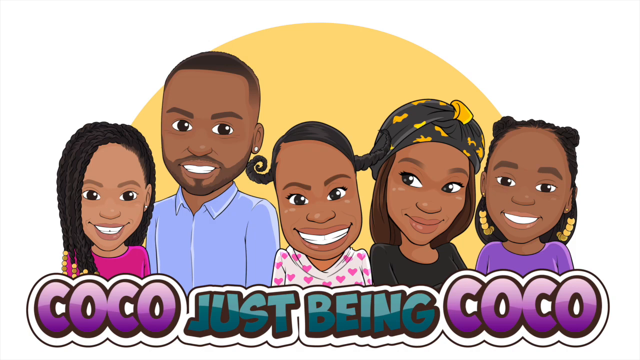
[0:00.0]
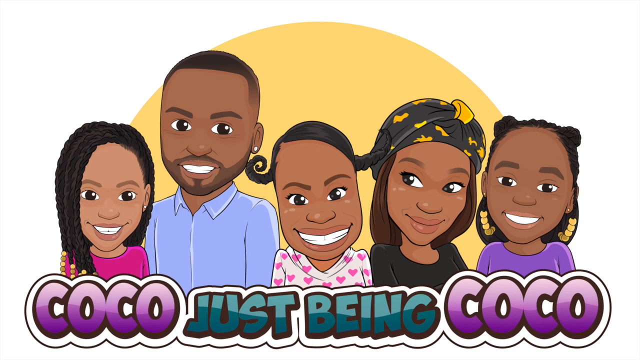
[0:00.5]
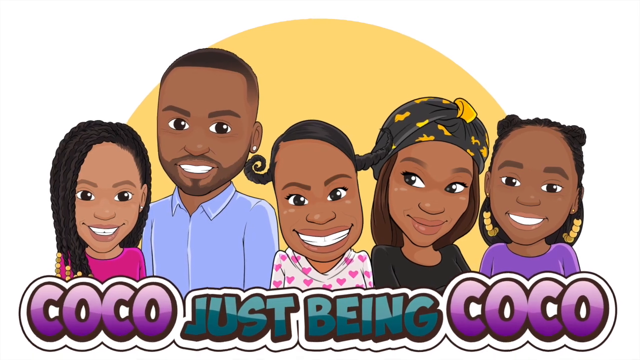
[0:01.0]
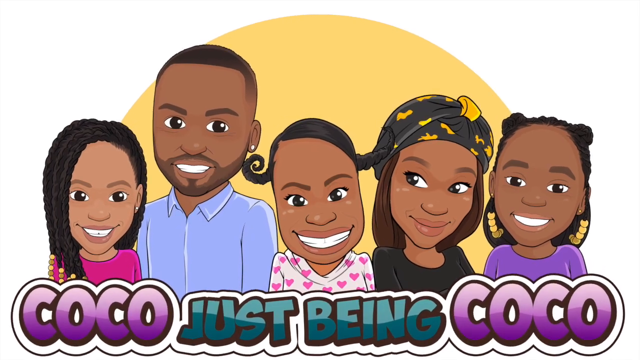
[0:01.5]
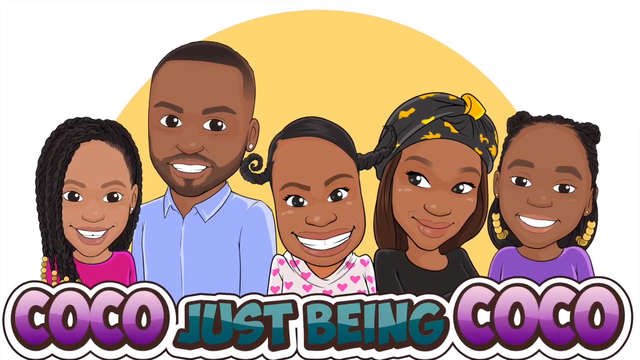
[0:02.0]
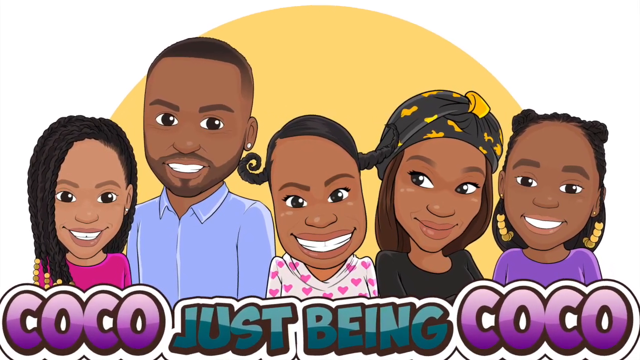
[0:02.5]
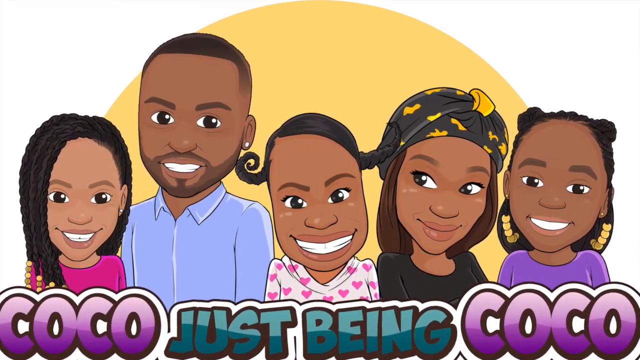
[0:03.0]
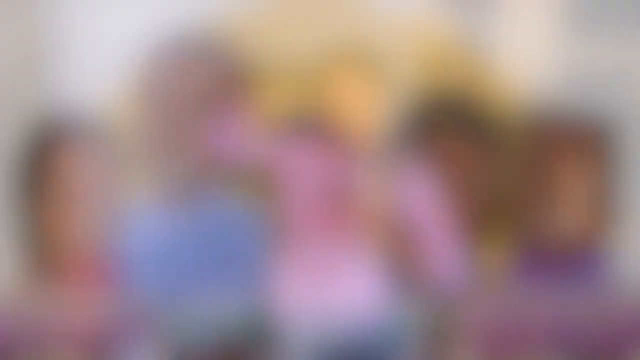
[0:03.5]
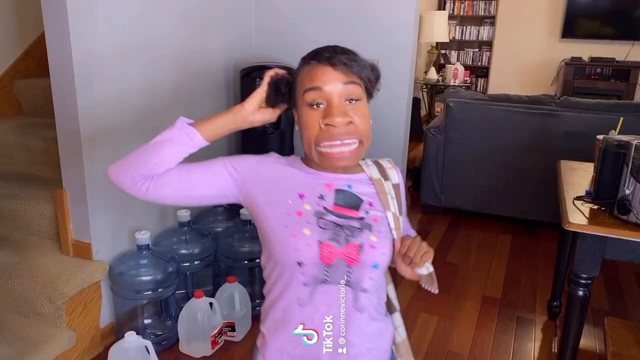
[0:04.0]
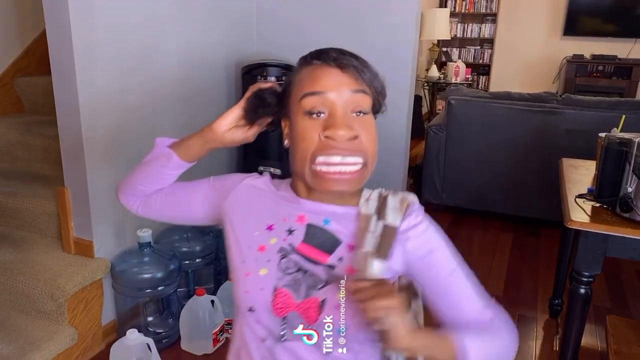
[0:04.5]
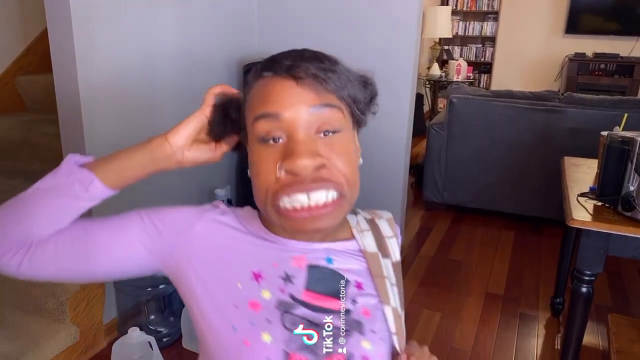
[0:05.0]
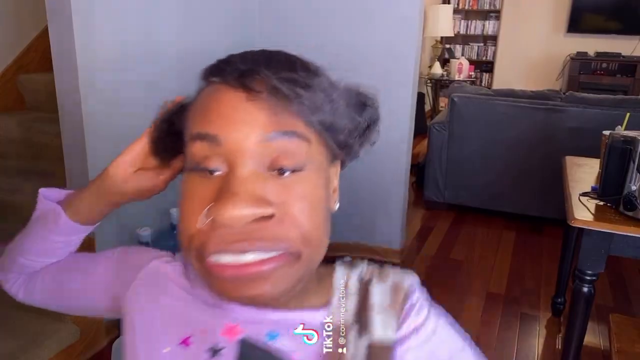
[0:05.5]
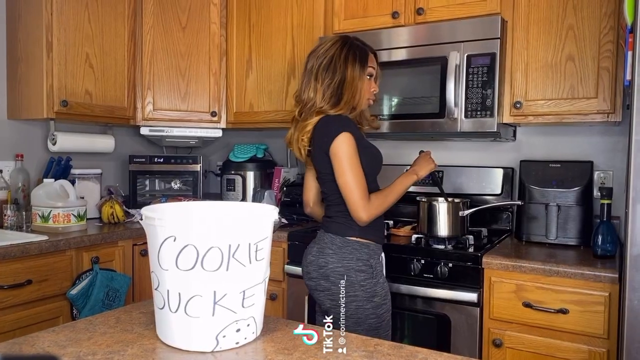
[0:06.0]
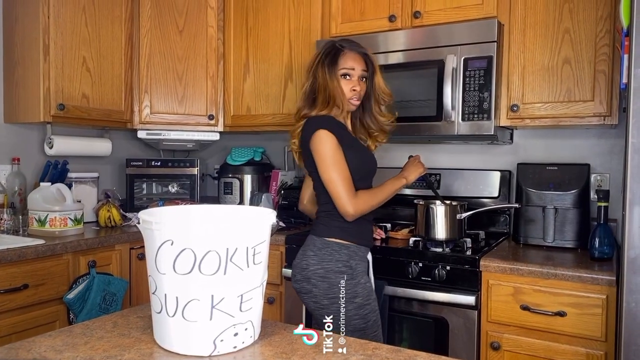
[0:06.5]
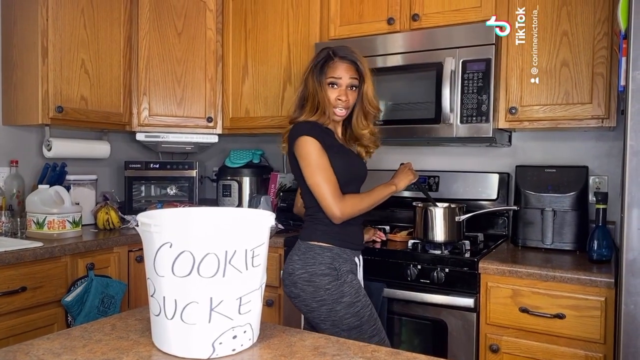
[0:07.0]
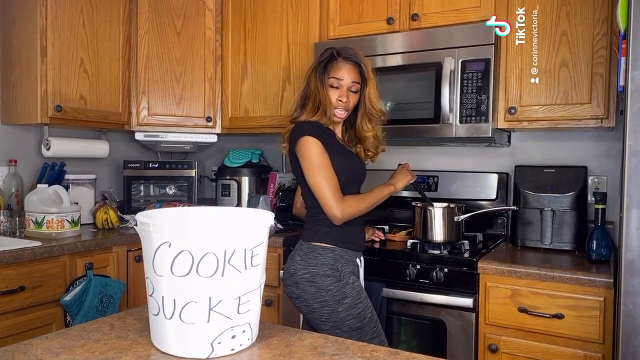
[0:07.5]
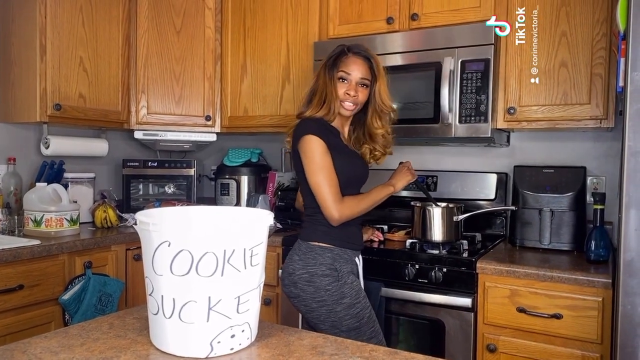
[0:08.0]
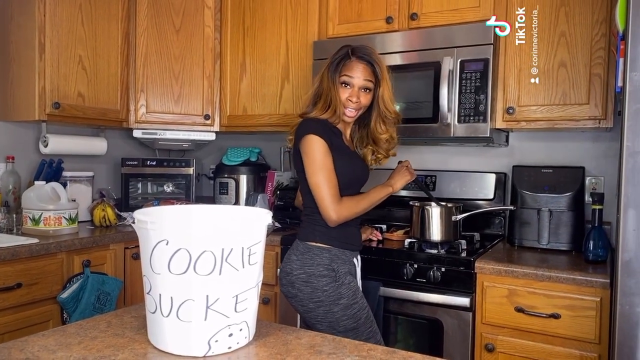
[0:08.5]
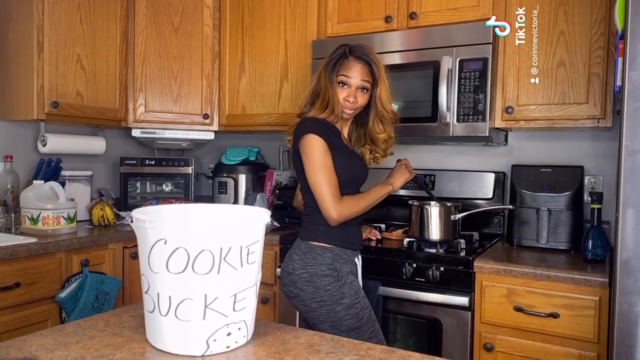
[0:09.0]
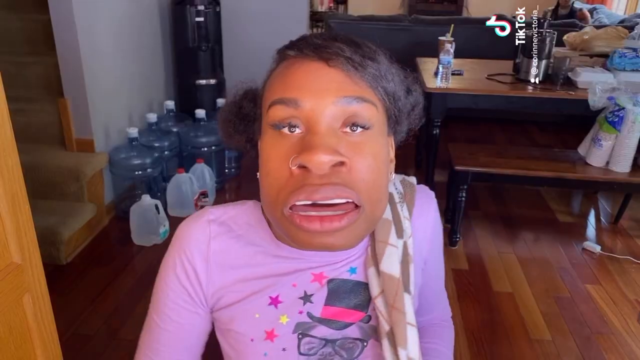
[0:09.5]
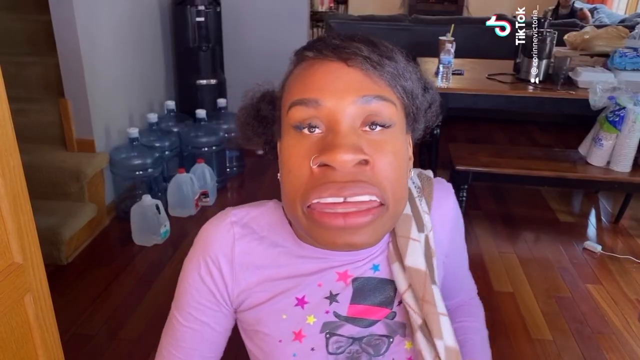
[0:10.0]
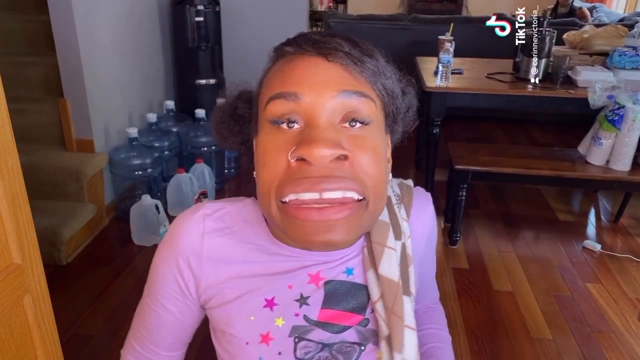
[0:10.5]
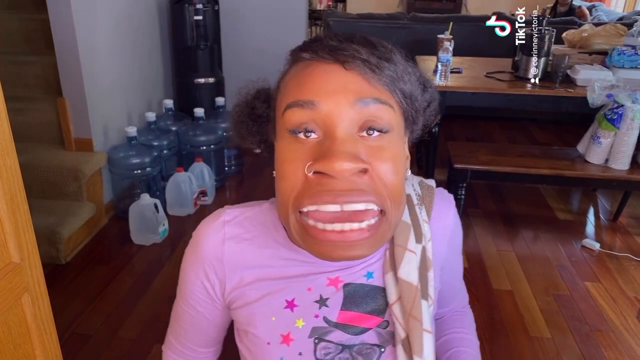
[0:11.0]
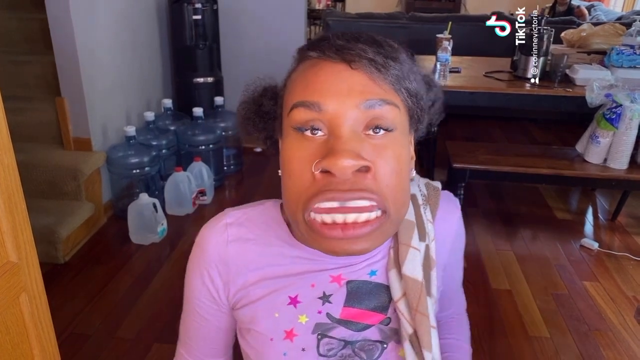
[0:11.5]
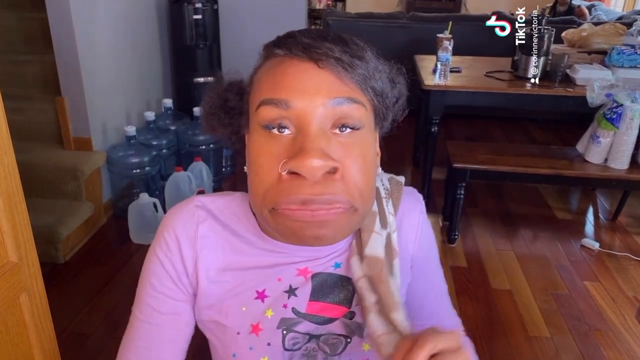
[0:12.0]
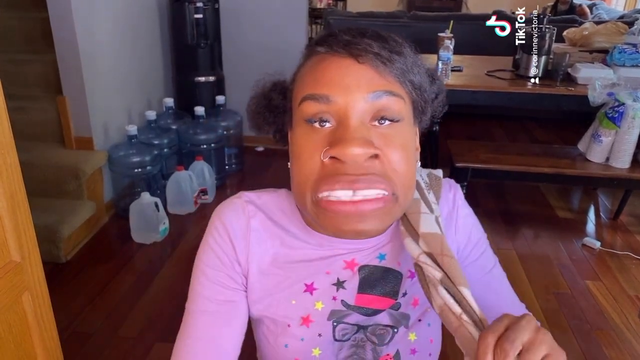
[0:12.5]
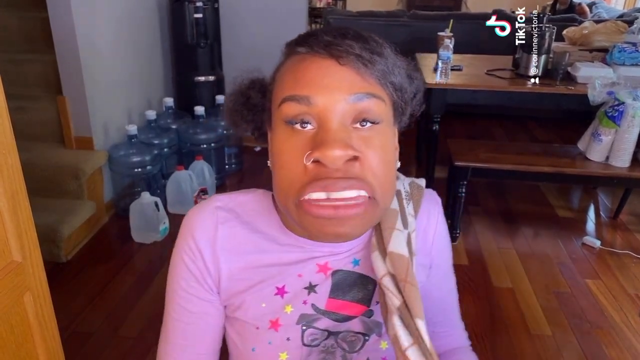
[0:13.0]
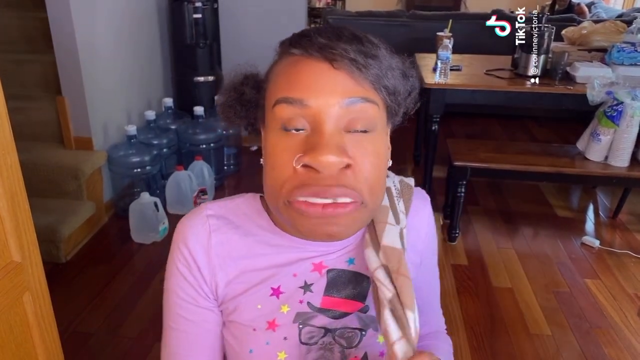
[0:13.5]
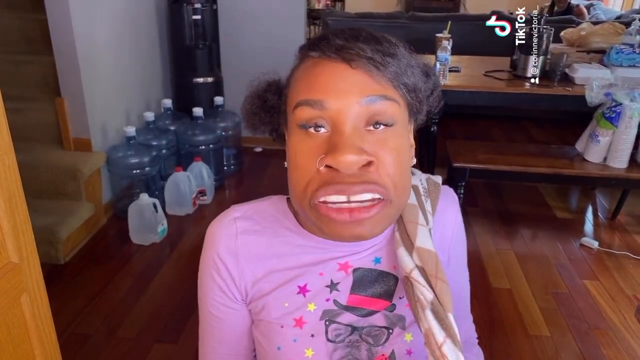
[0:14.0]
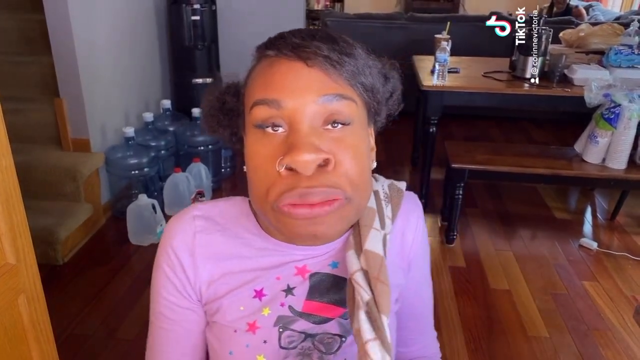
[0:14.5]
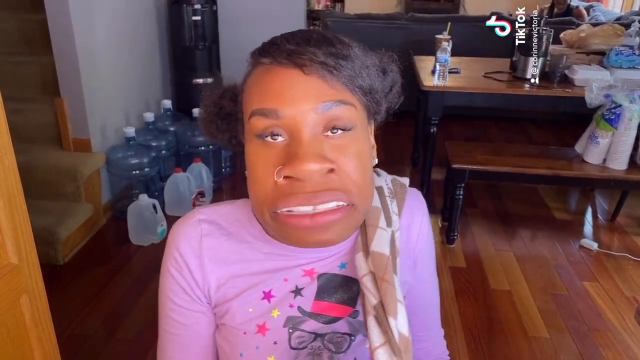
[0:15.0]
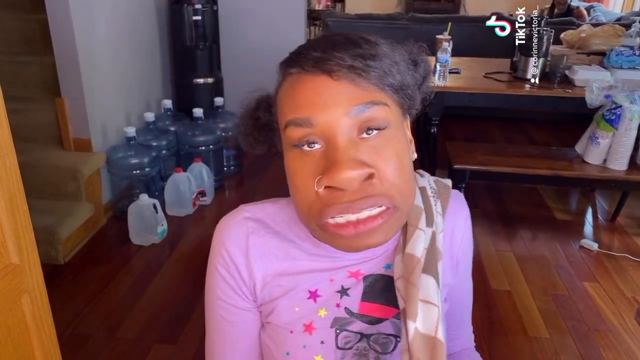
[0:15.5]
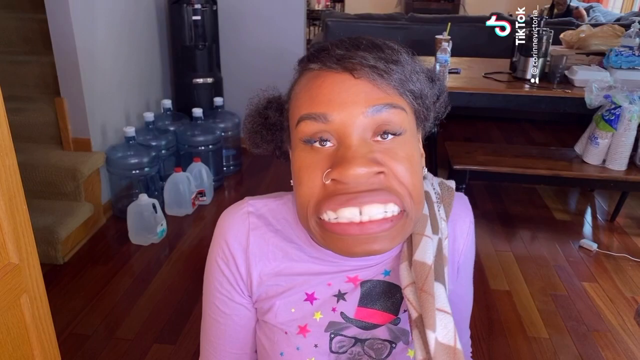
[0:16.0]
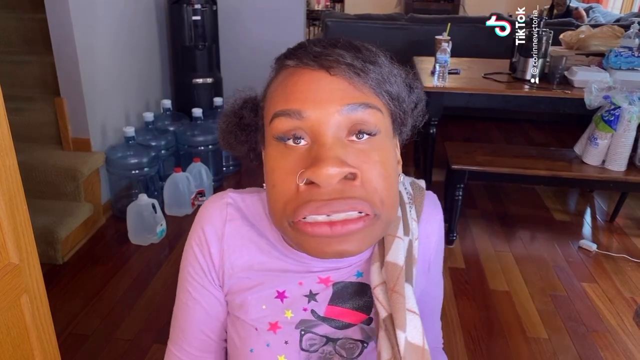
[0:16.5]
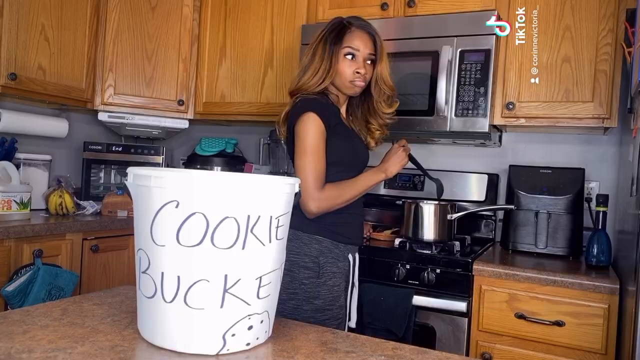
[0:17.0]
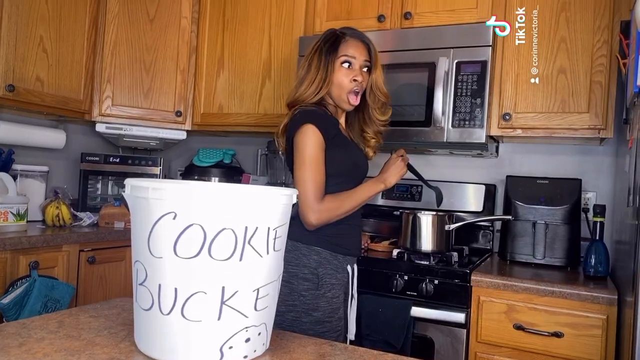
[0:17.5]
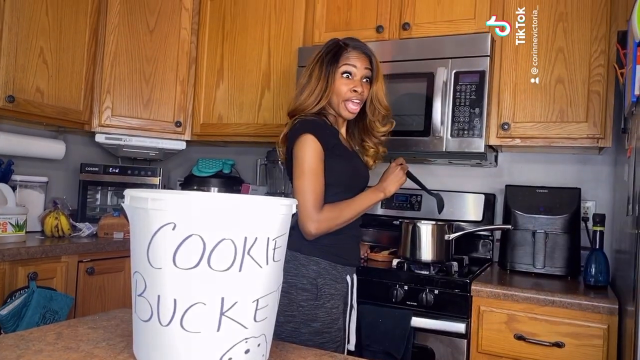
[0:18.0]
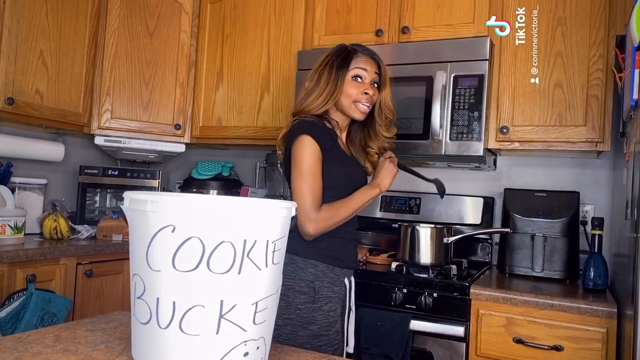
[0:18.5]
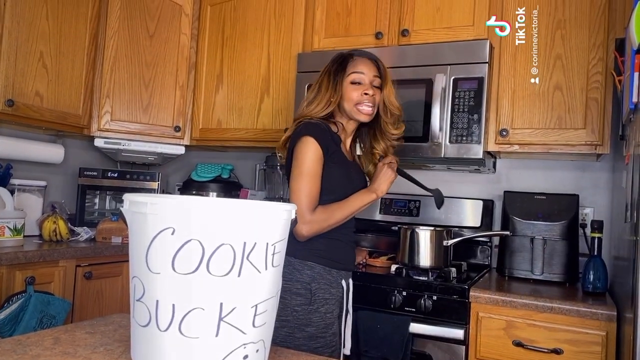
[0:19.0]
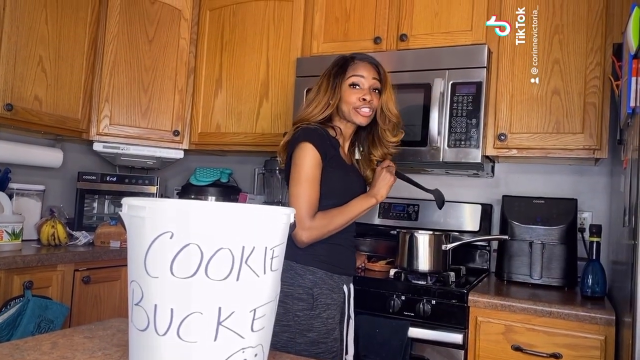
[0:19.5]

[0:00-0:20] An African-American family stands on the screen. At the far left is a young girl with dreadlocks and a pink shirt. The father has an earring, a blue button-up shirt, a scruffy face and short hair. In the middle is someone with a round face who appears to be the mother or possibly a different kid; it is hard to tell. She wears a white shirt with pink hearts all over it and has pigtails on each side. Beside her is what seems to be an older woman with her head wrapped in some kind of head wrap, her hair down, and a black shirt. On the far right is a younger girl with beads in her hair and a purple shirt. Words across the bottom of the screen say "Coco just being Coco." The video zooms in on the woman in the middle, then shows real-life people in a house making facial expressions, with filters that make them look like the Coco characters from the cartoon. The first scene shows a woman in tight pants and a tight shirt with long curly hair, standing at the stove cooking. On the counter behind her is a bucket that says "cookie bucket." A woman with a filter on her face walks up, talking about the cookies and clearly wanting them badly. The woman who is cooking tells her she has to wait until suppertime and can't have the bucket of cookies before supper.